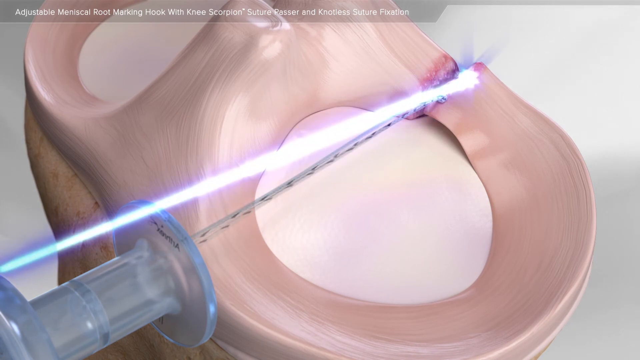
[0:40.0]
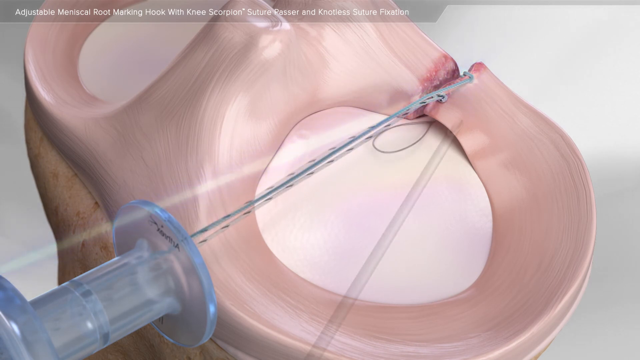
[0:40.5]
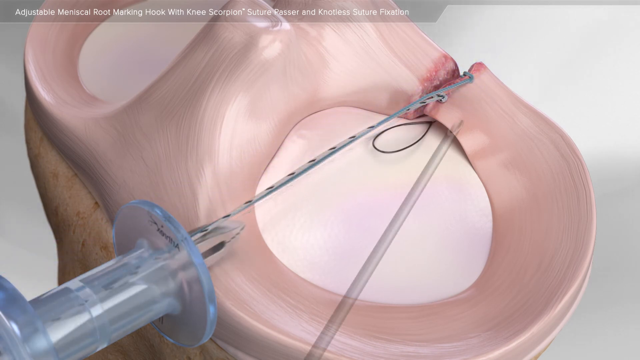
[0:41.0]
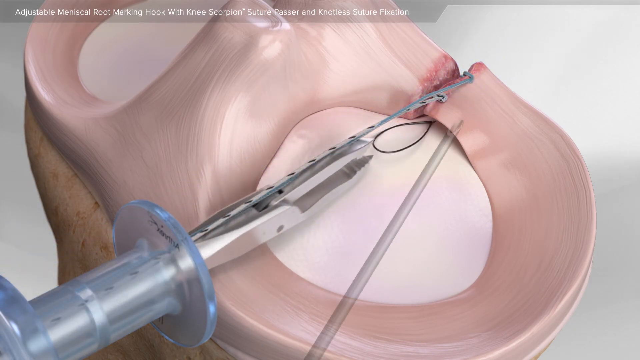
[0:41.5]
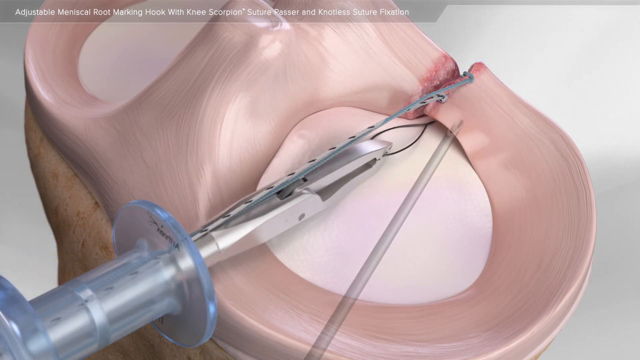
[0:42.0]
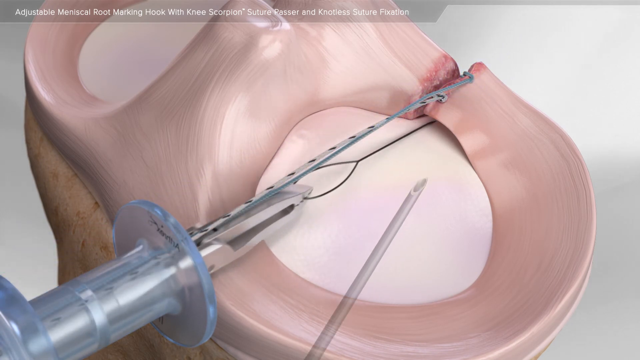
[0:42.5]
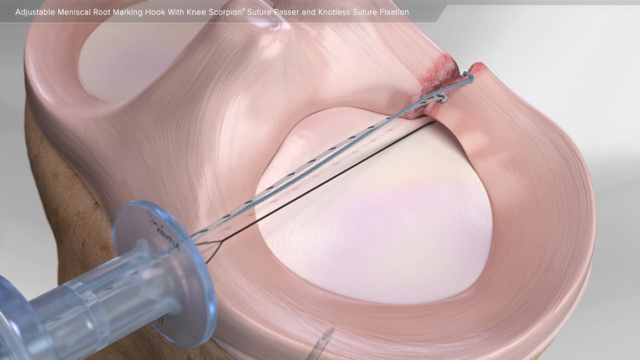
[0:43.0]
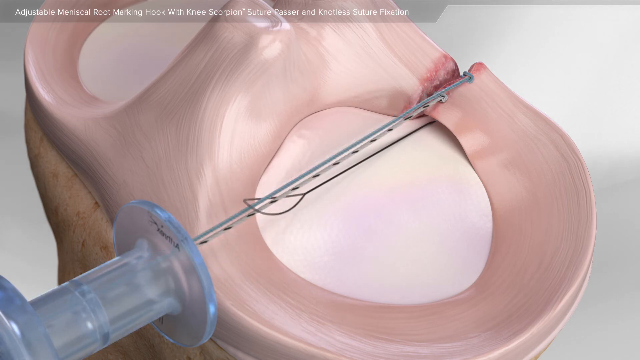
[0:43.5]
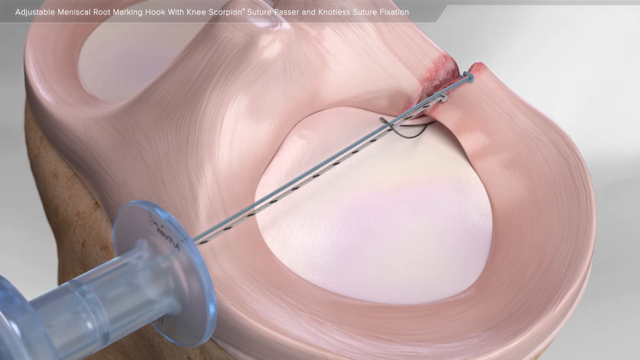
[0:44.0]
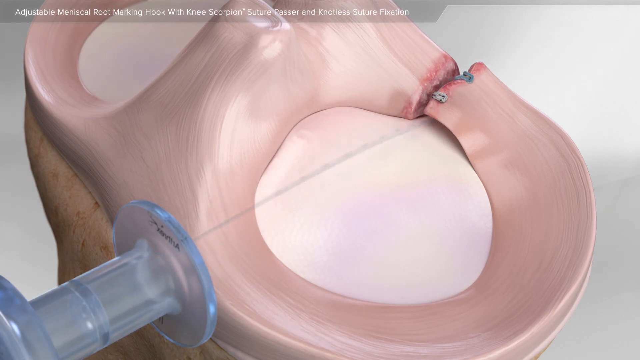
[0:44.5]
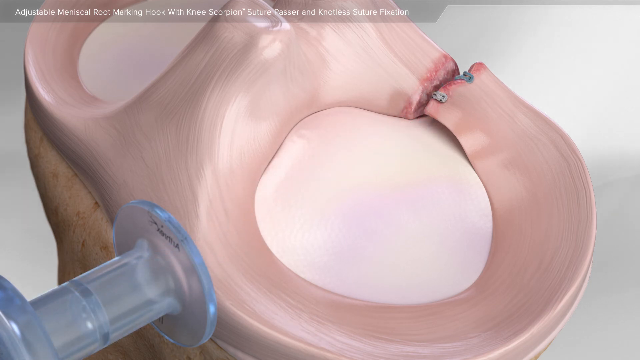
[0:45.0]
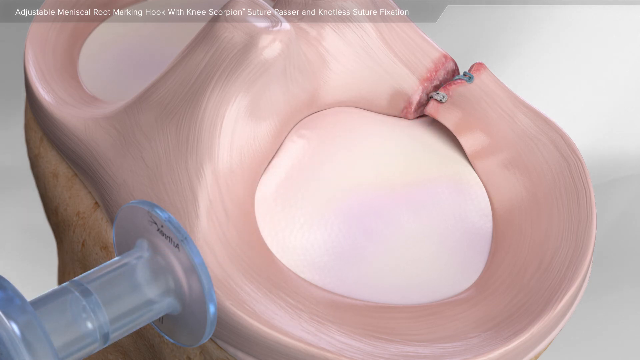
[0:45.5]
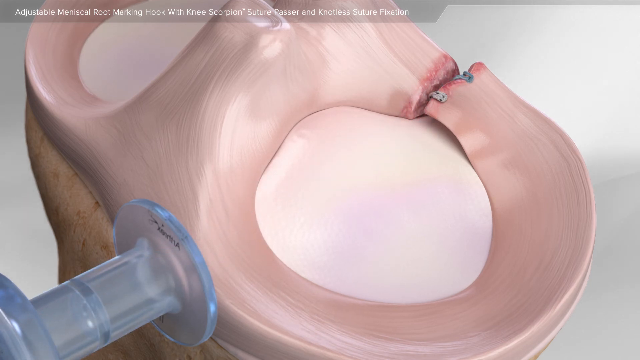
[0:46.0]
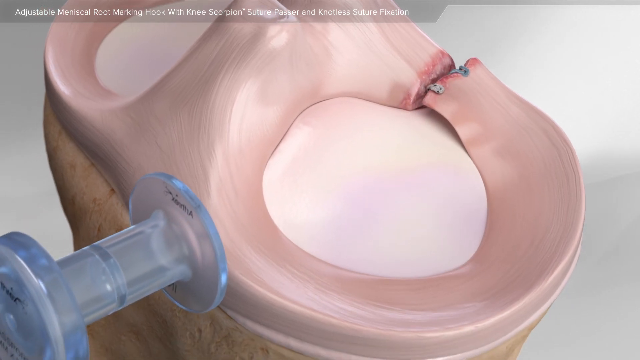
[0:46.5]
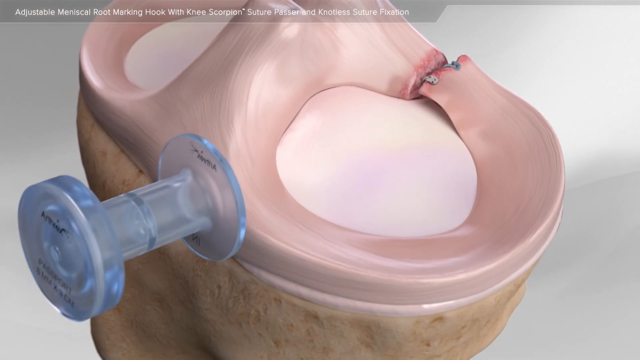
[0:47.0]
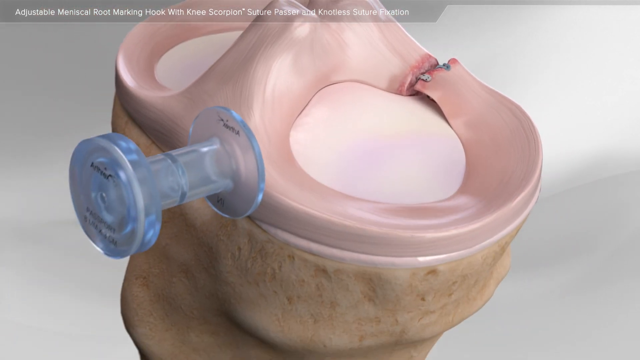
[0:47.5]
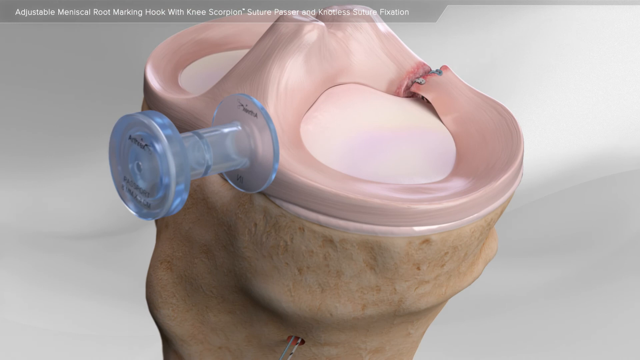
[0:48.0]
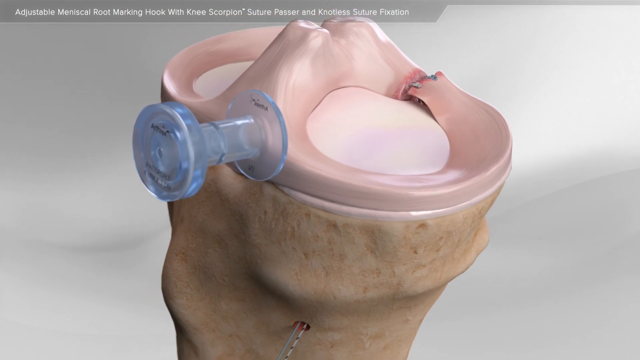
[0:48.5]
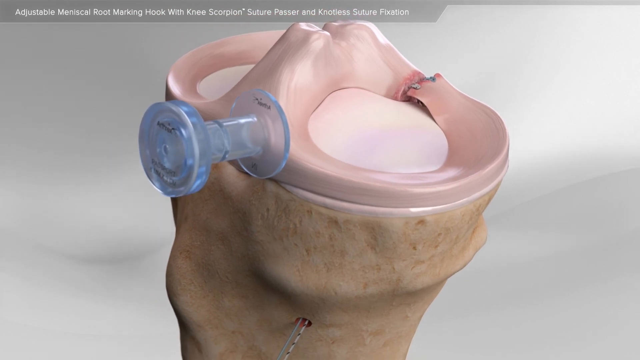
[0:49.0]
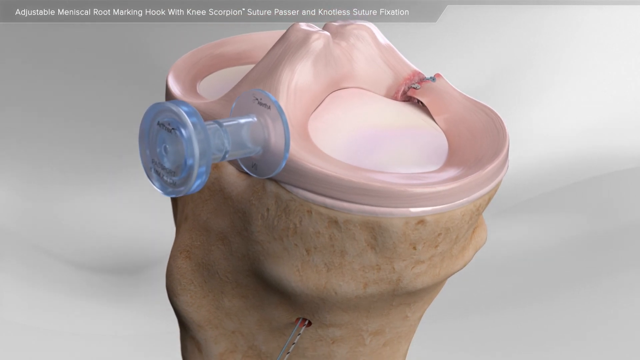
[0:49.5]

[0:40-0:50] Something seems to be highlighted through the knob, apparently to show that a different part has been added. It looks like two pieces of rope with black dots, one connected to the stud and one at the other end of the bone, with a bit of black string between them resting on the joint above the tibia. Another white hollow tube seems to come in from the right. The parts apparently are being put into the knee joint to tie it together so the tear is fixed. A big metal tweezer-like tool is inserted through the knob and pulls on the string; the string has formed a small noose that the tool grabs and pulls, then snaps back, and the string disappears, with the parts apparently locked into place. At the very end, the bone has sort of fallen down and reconnected with its broken part.